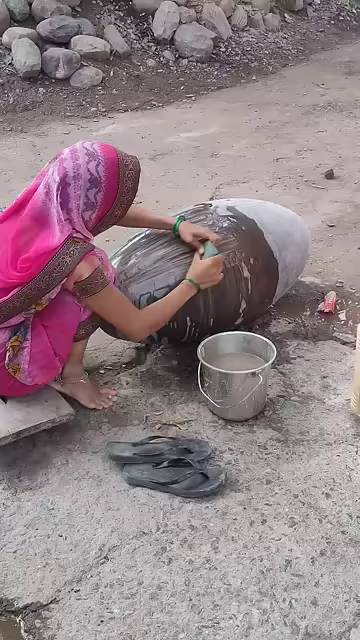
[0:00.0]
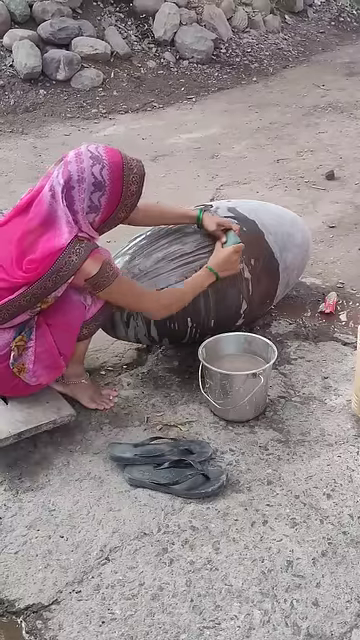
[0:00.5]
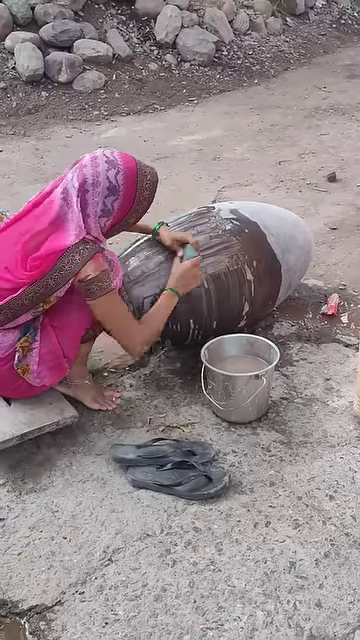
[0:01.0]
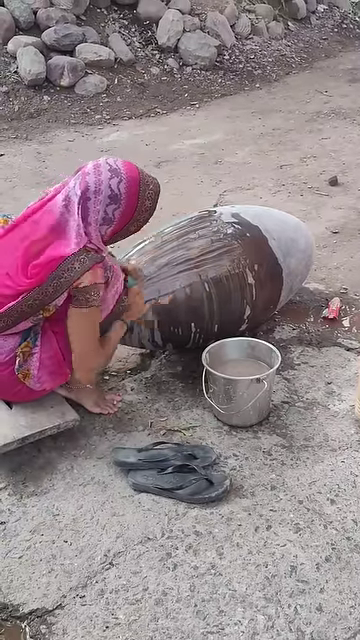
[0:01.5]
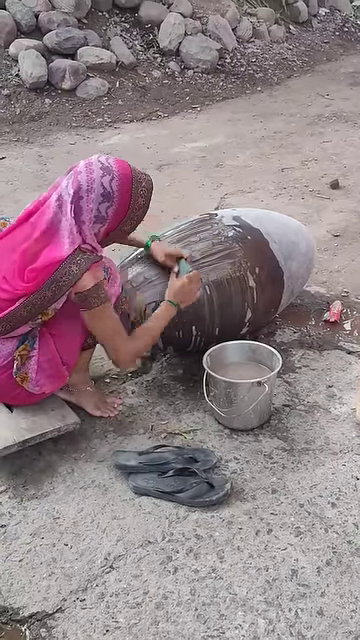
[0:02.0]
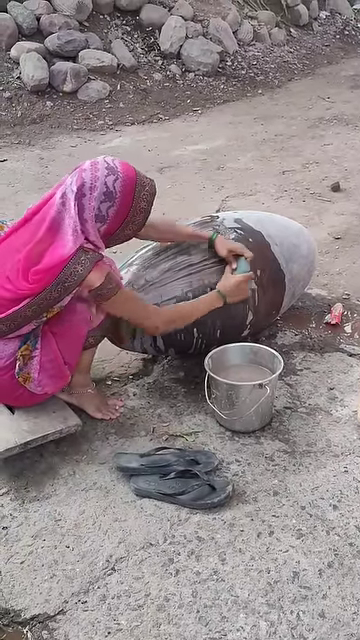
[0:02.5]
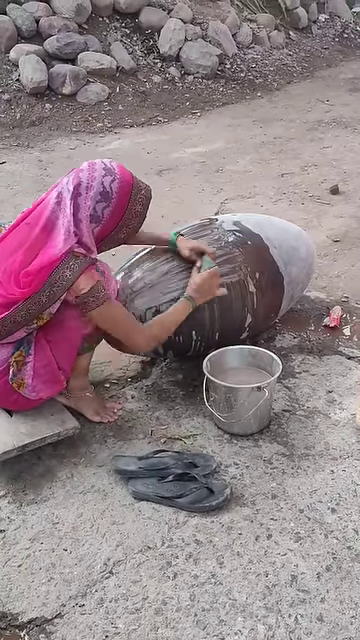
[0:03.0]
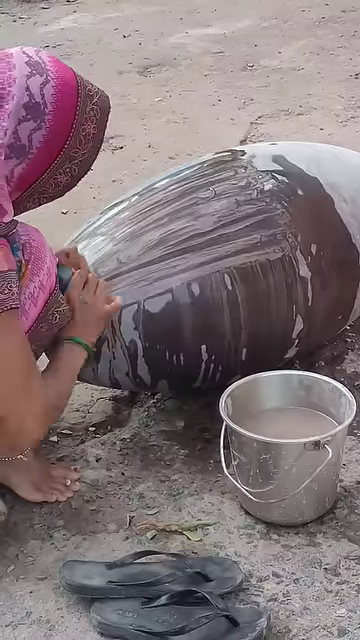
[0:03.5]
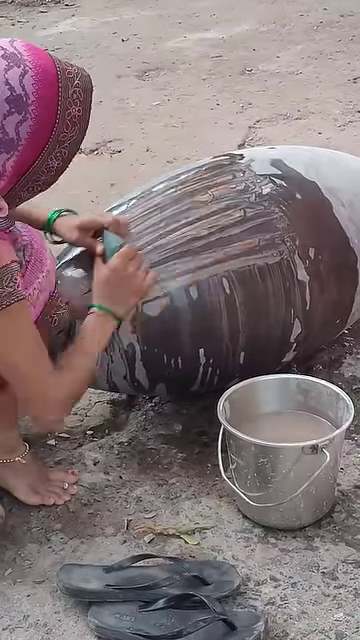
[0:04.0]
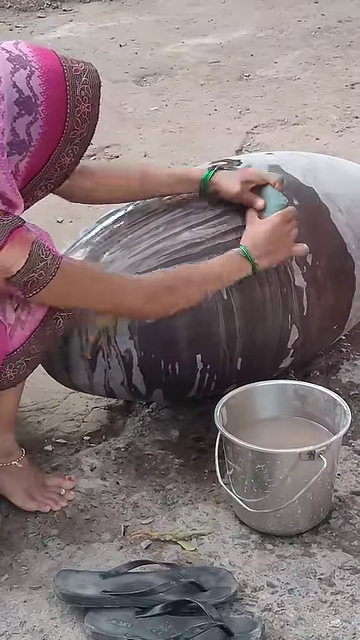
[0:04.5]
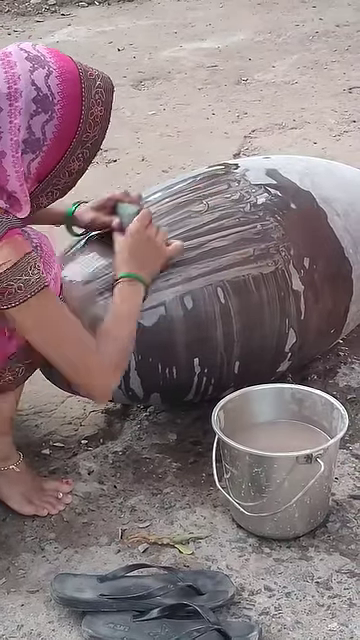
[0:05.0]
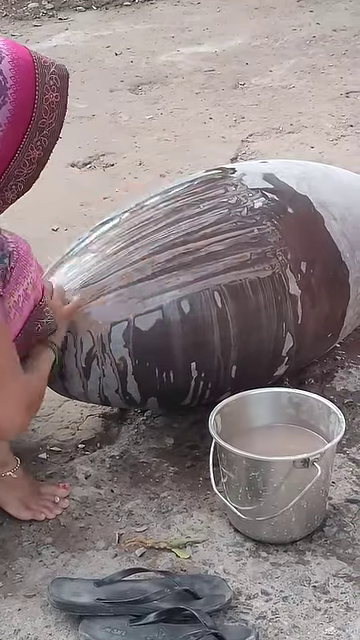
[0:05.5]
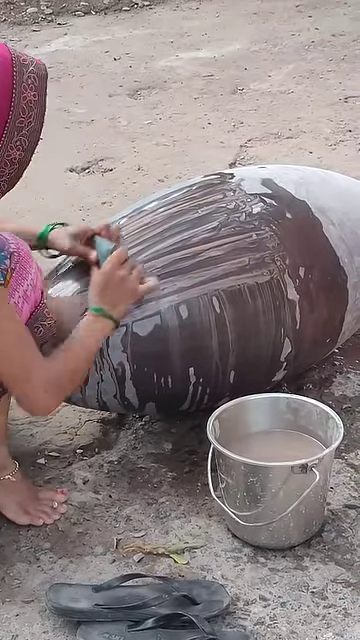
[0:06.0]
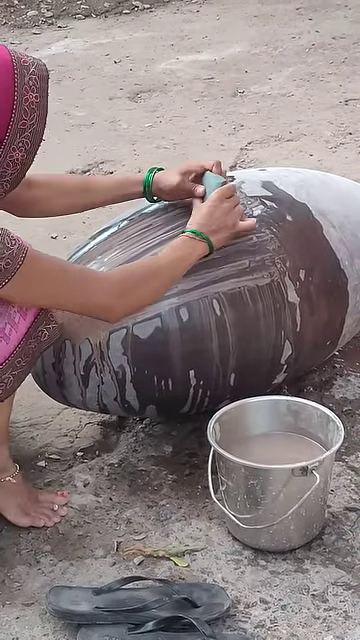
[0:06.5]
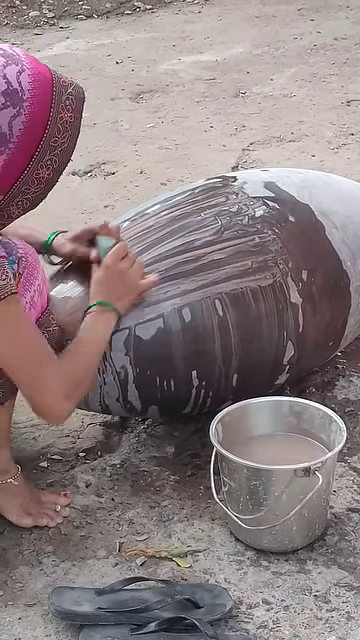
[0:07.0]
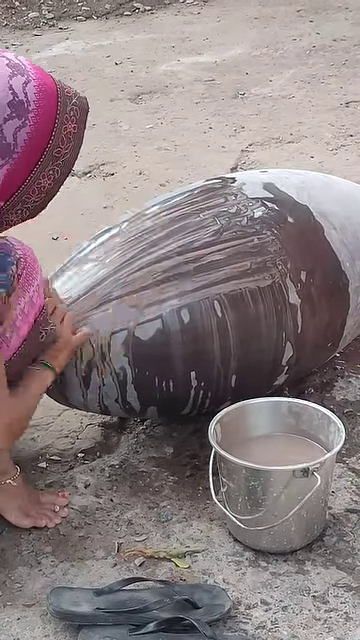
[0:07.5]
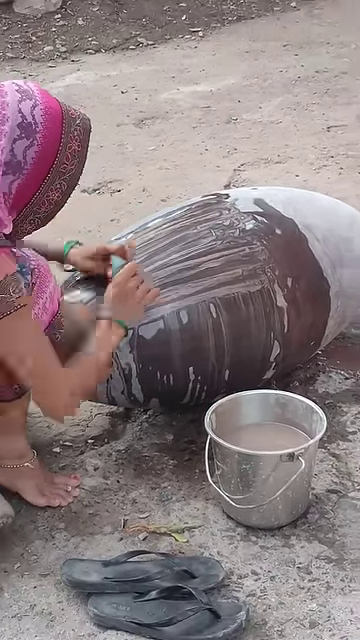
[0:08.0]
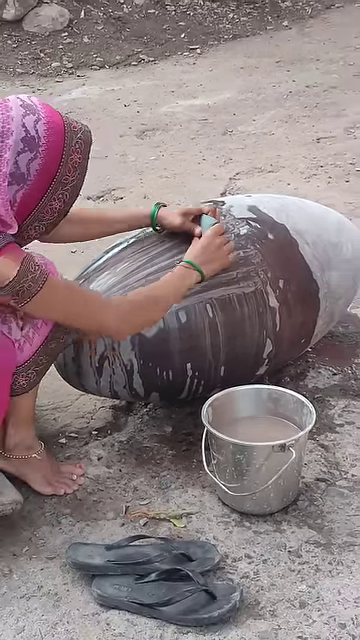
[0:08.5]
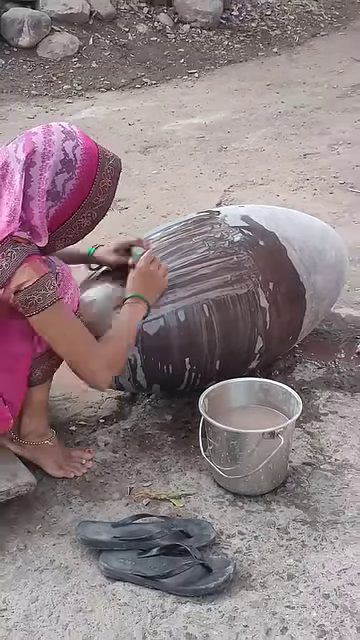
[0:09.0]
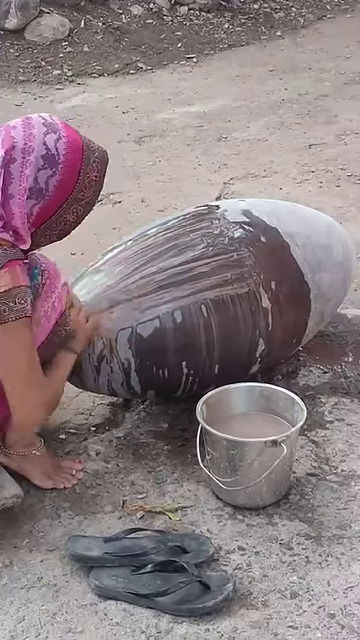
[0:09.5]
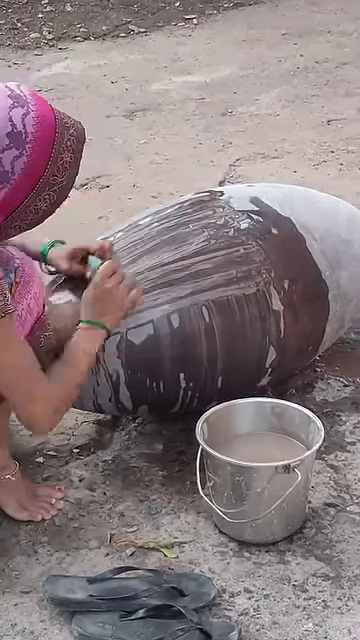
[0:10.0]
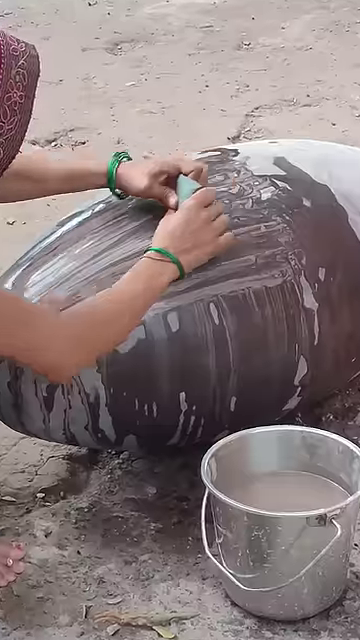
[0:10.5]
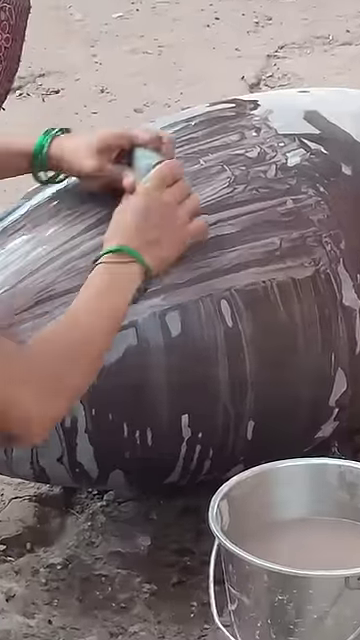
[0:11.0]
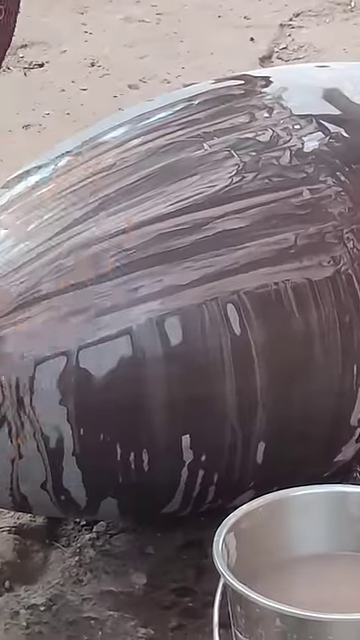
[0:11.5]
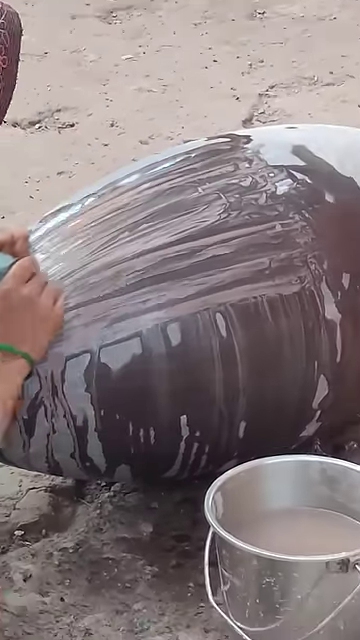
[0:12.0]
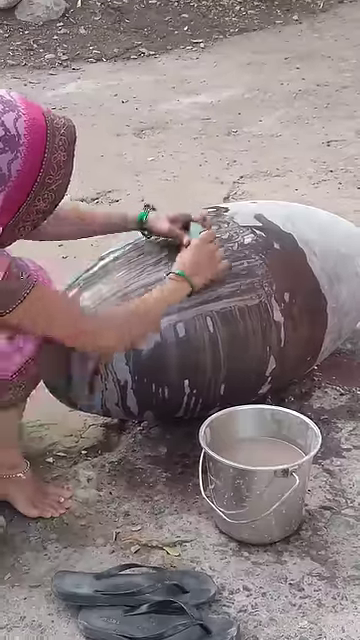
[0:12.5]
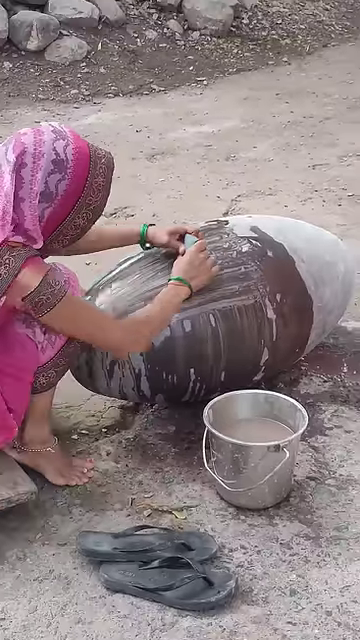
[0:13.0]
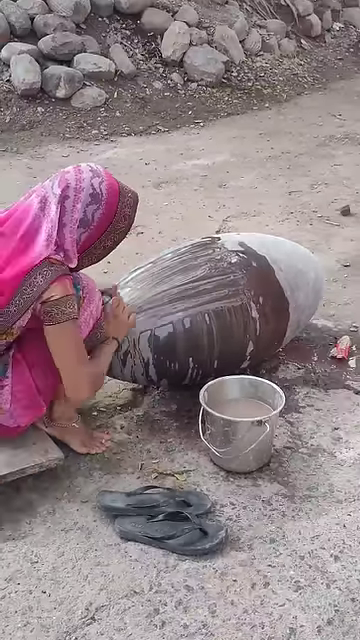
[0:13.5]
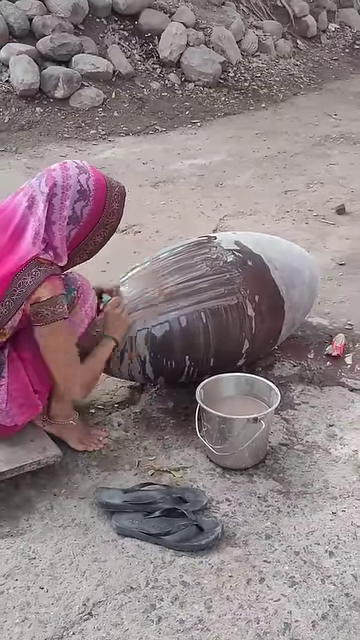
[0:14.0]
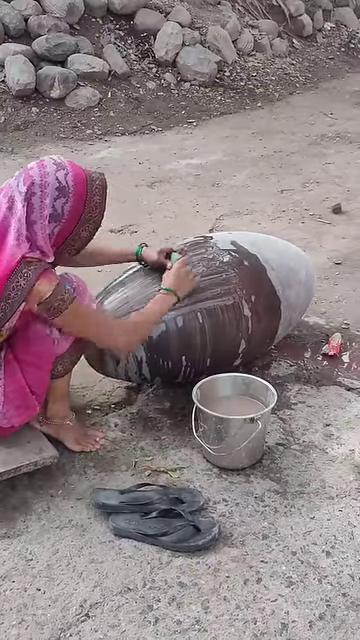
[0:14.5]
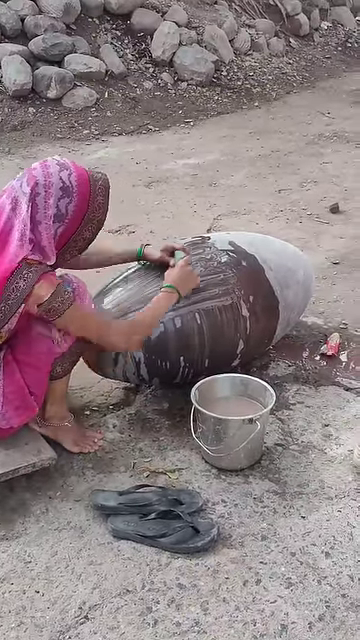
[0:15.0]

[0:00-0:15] A woman dressed in pink wears an entire outfit that matches the headscarf covering her head. She seems to be sitting on something very flat, and she is barefoot, with her flip flops to the right of her. There is an aluminum-looking pail filled with a muddy-looking liquid. She is outside, apparently in an area with a lot of dry dirt, and there is a small mound of rocks in the background. Her face cannot be seen, but she is holding a brush that she uses to scrub a large object that looks like a very large egg, half the size of the woman. Three quarters of the egg is covered in brown paint, and she seems to be scrubbing horizontal lines into the paint, repeatedly moving her hands away from her and back towards her. The camera zooms in on what she is doing.